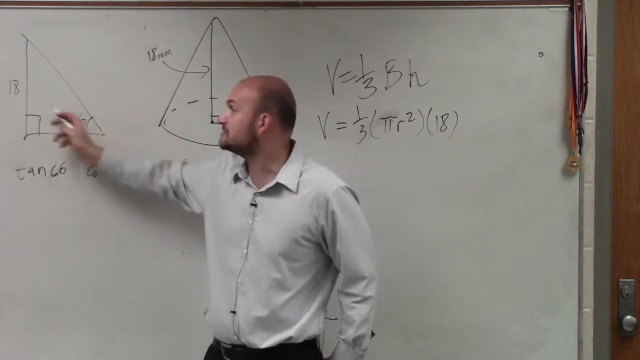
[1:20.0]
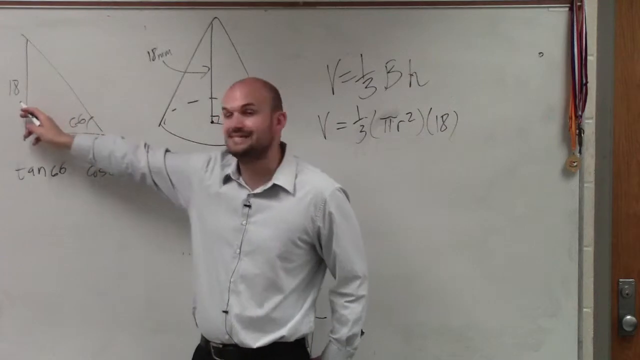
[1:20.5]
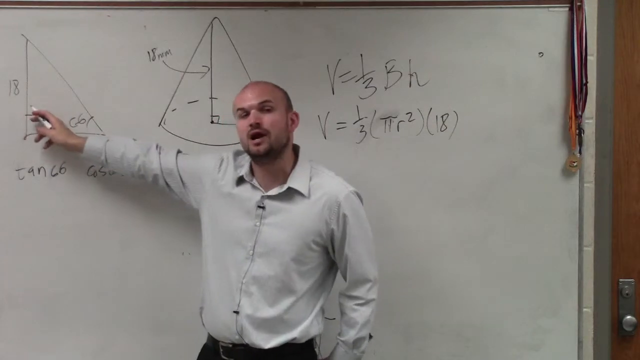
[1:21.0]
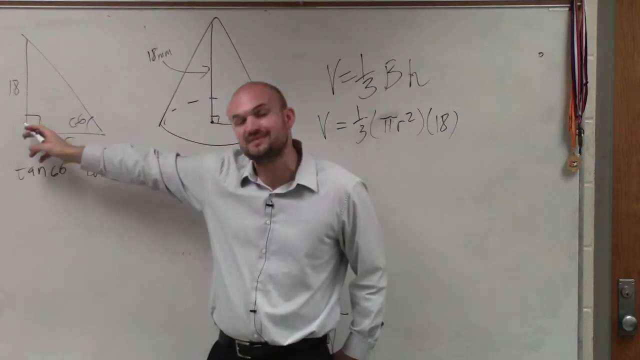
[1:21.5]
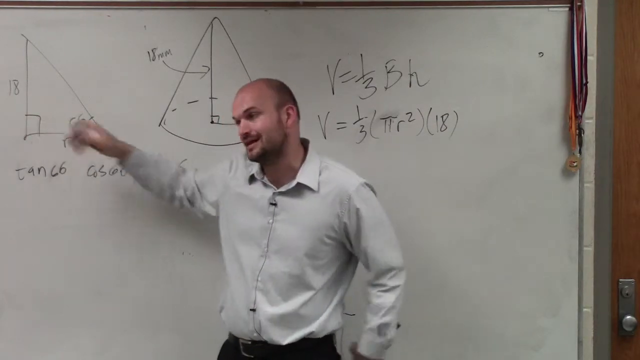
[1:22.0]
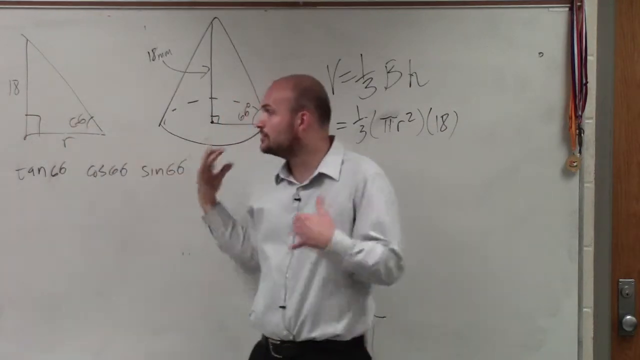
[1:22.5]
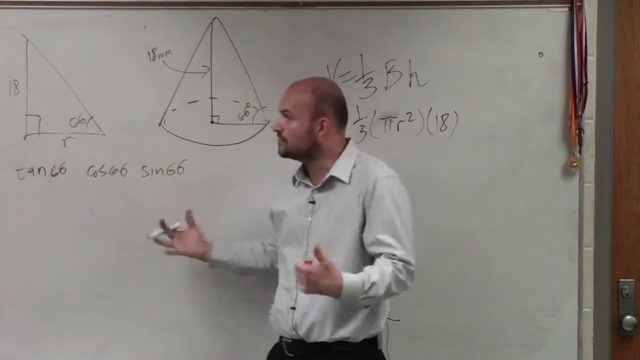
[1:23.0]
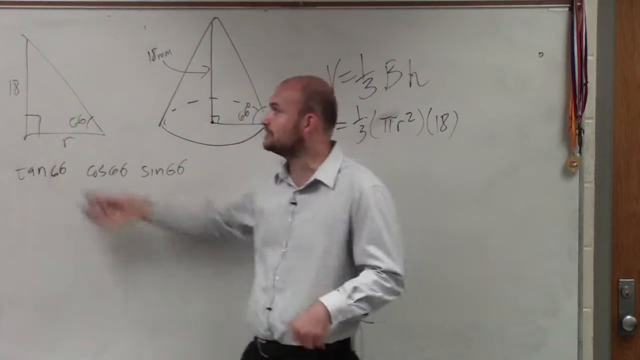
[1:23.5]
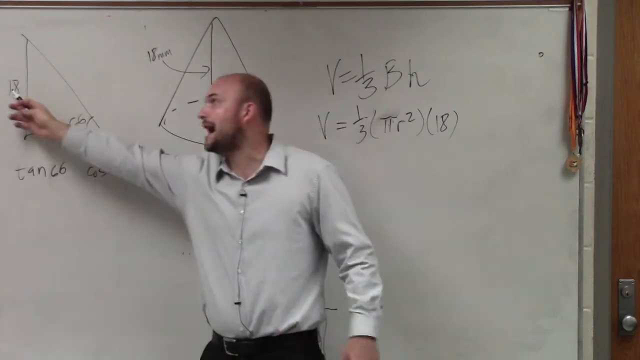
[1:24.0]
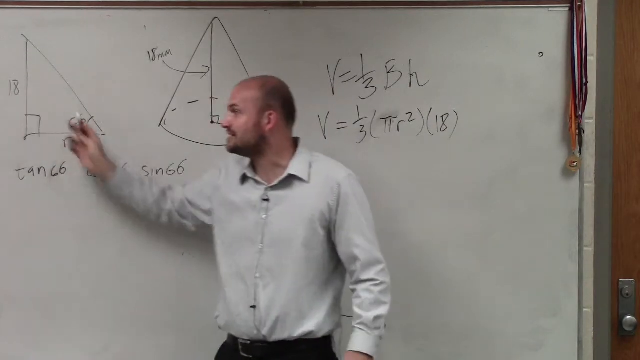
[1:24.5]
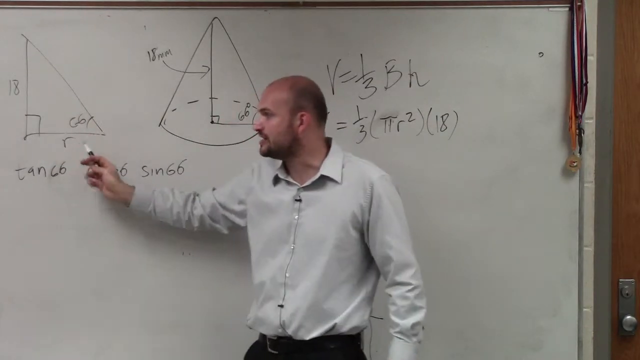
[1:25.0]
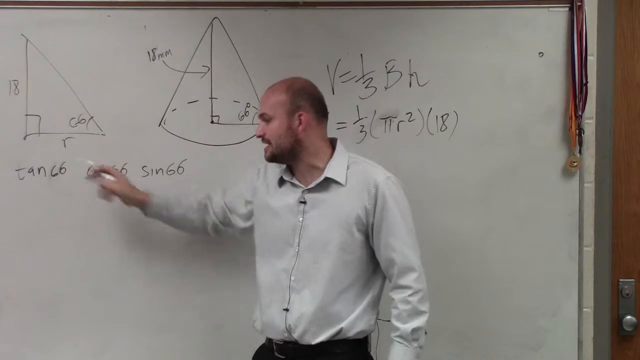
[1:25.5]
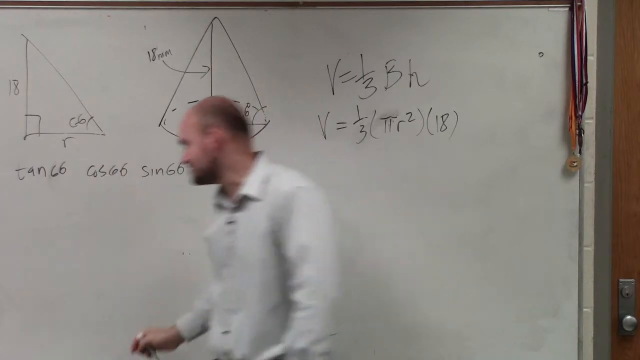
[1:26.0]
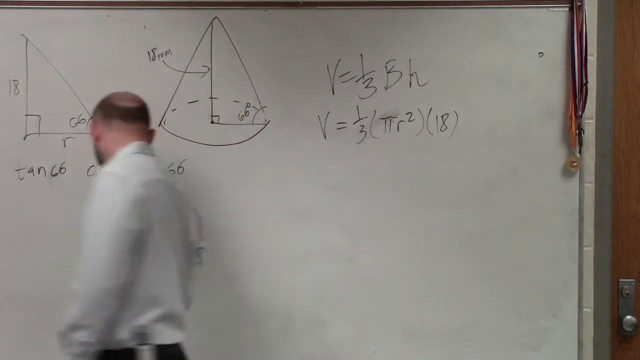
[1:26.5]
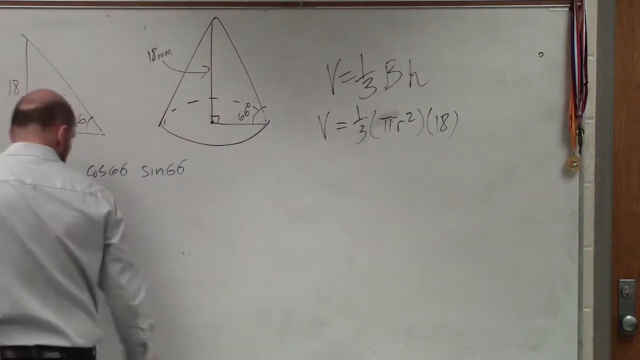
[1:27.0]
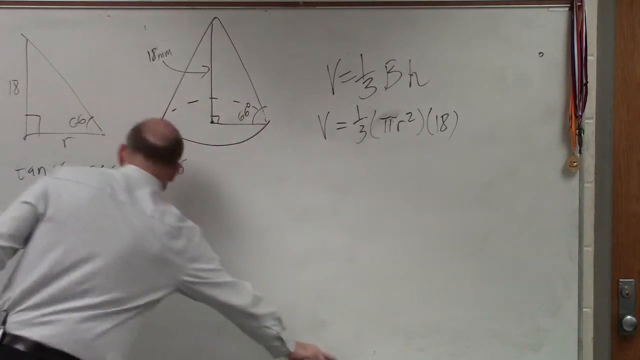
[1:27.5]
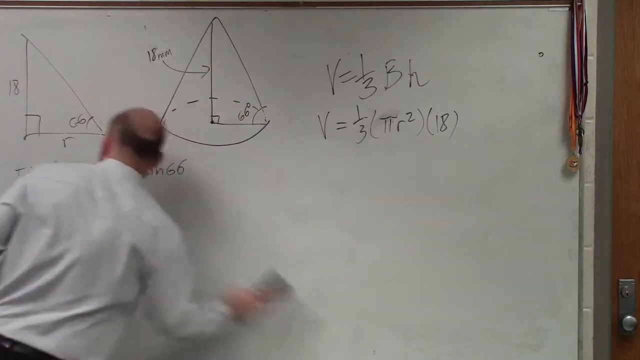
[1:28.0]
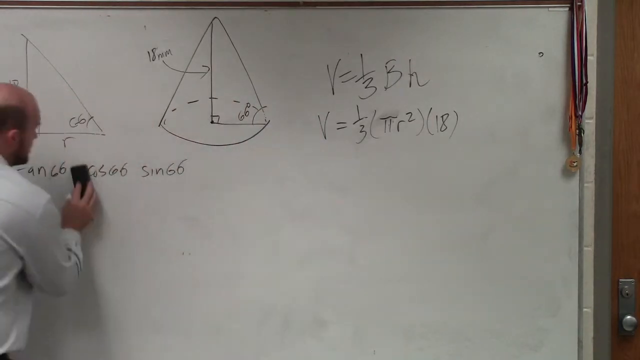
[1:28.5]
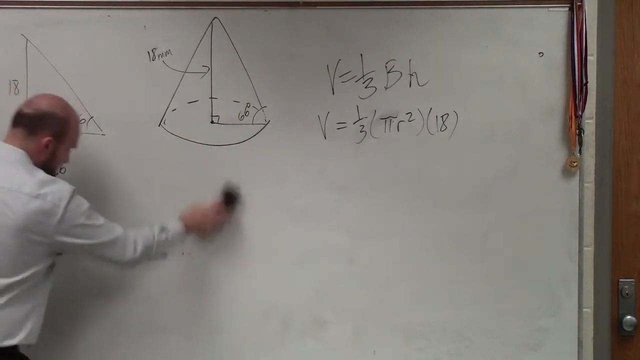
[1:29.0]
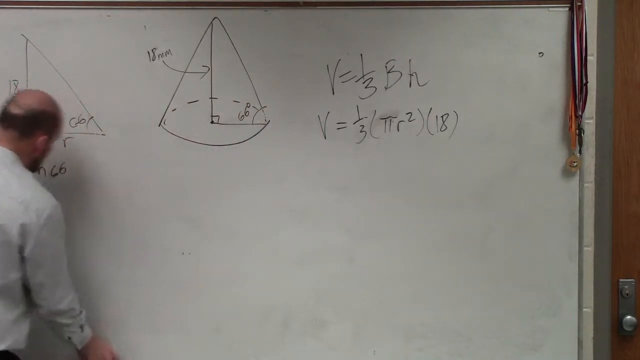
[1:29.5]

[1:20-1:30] The teacher, the man in the white shirt, gestures with the whiteboard marker in his right hand and takes his left hand out of his pocket. Facing the classroom, he is very animated, using both hands and periodically looking back at the diagram he points to. He points with the index finger of the hand holding the black whiteboard marker, mostly using the two fingers of his right hand that hold the marker, at various parts of the triangle: the 18, which is one length of the triangle, and the R, which is the other. The 66 degrees is still there, and all the other parts of the equation are visible on the whiteboard behind him. He picks up the eraser and erases the cosine and sine 66, then turns away and begins to write something else on the board underneath.